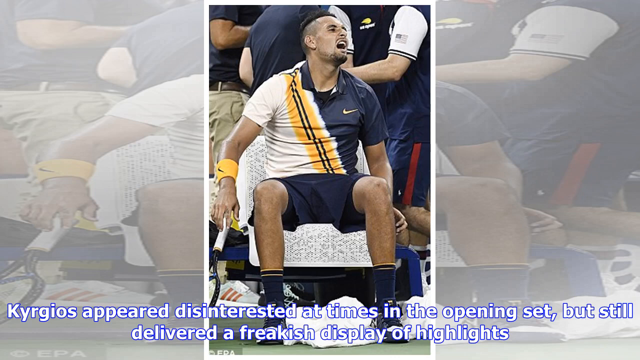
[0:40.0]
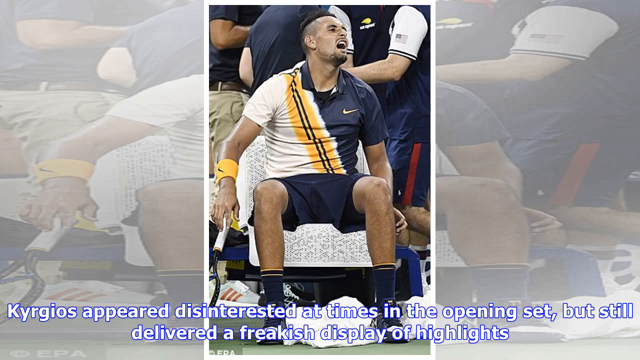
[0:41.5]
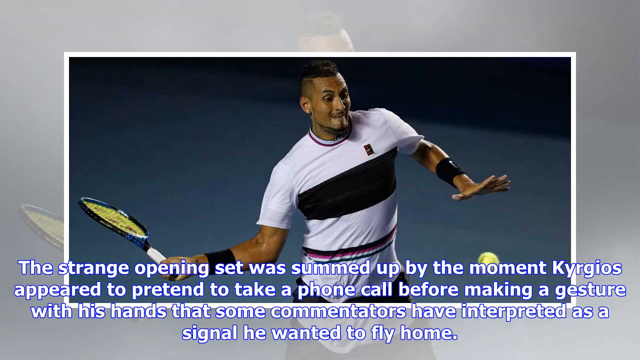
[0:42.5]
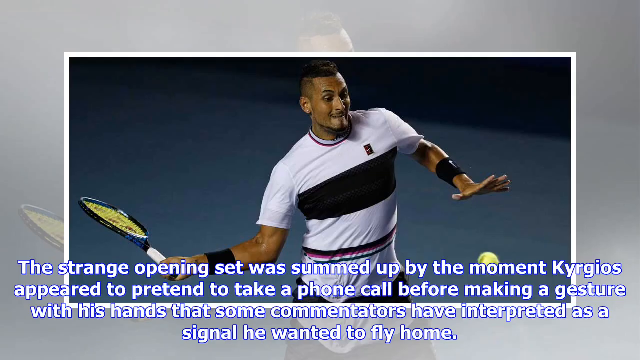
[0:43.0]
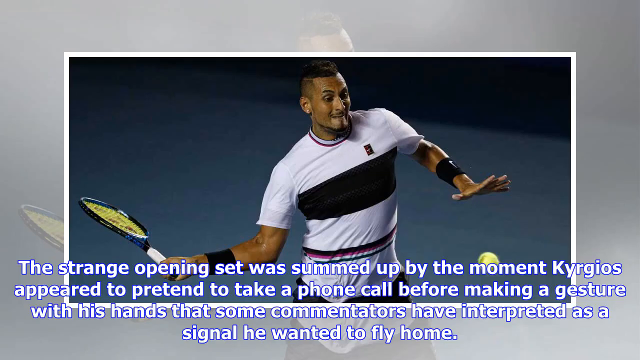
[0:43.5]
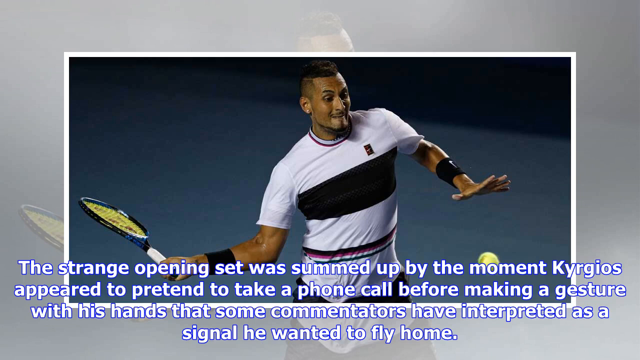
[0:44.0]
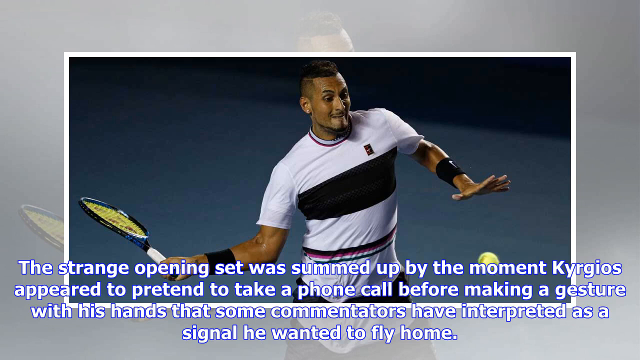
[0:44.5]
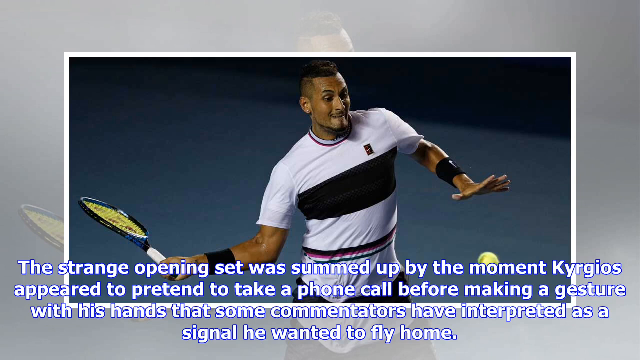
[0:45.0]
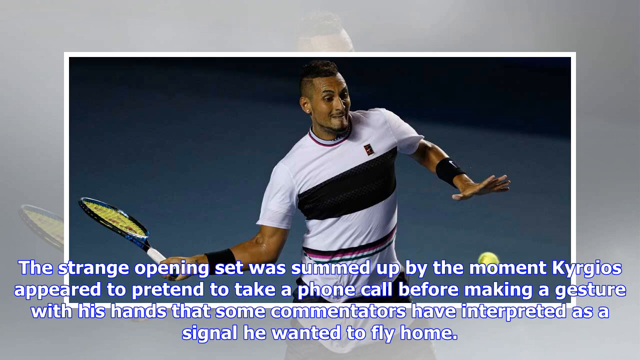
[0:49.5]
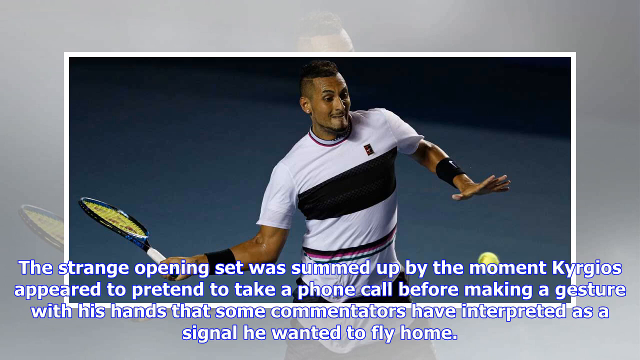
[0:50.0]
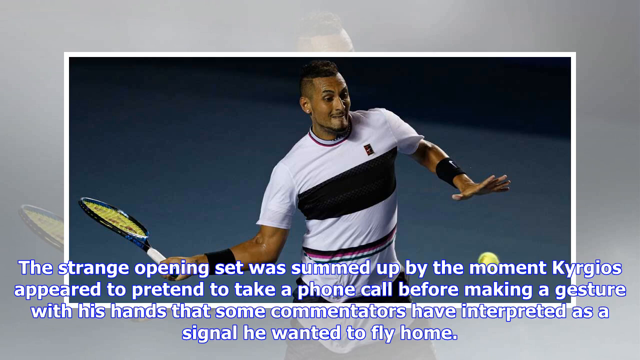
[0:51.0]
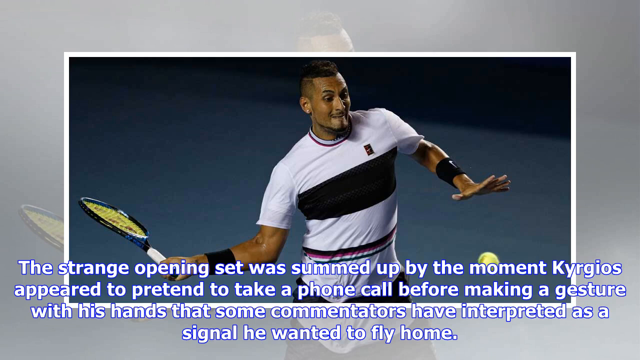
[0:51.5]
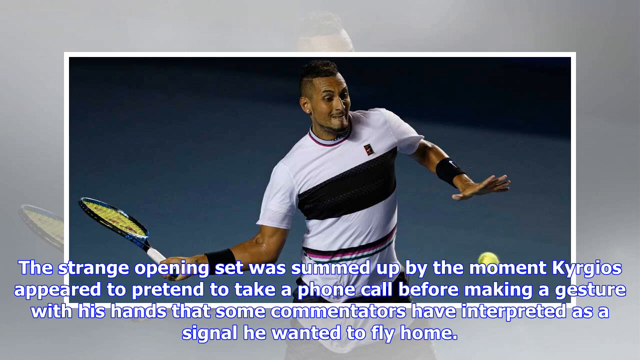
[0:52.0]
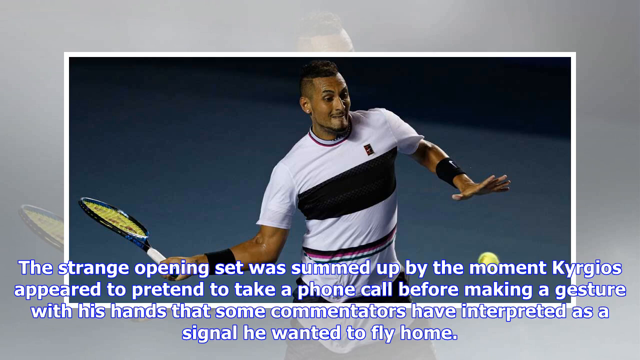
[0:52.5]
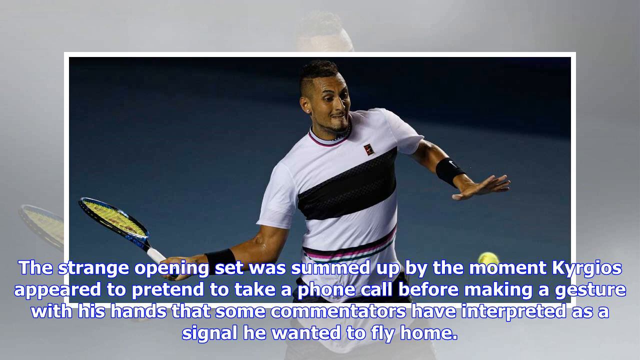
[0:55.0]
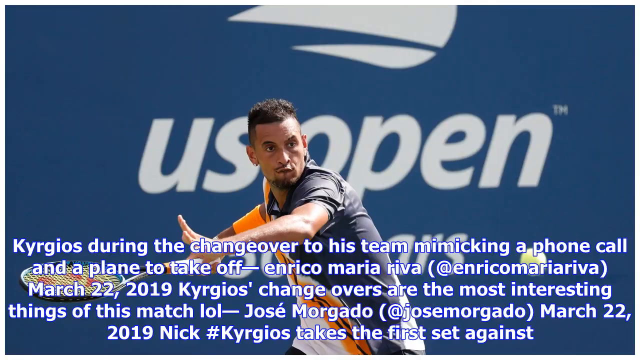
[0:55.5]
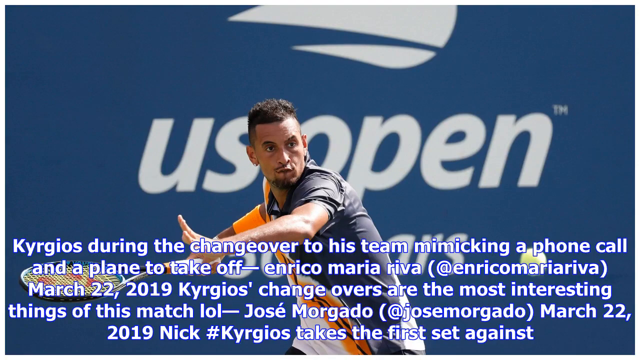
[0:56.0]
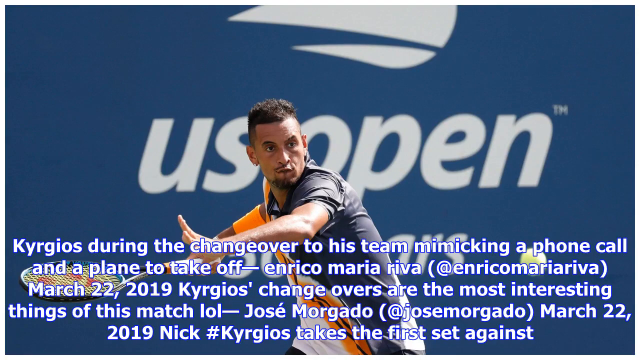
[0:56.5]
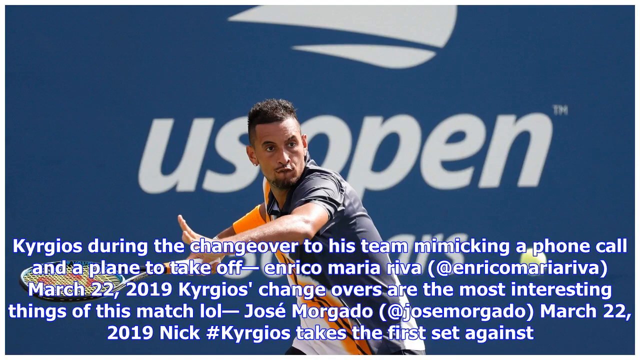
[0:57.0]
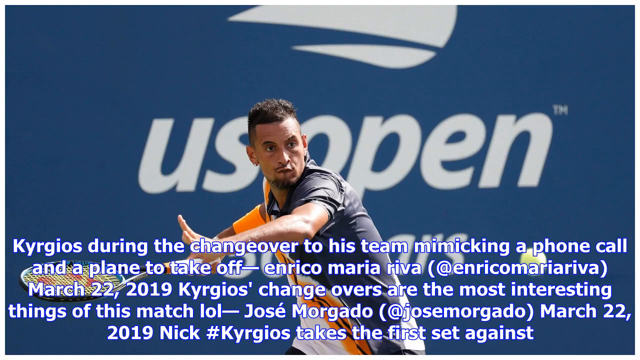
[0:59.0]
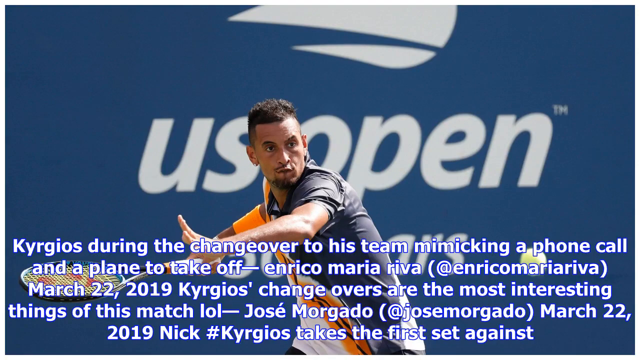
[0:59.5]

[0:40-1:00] The picture of Kyrgios shouting at someone while sitting down during a break stays on screen. It is followed by a picture of him midway through a return, about to strike the ball with his racket, making a weird face and looking focused and intense. Text mentions Kyrgios pretending to take a phone call, making a gesture with his hand that some commentators interpreted as a signal he wanted to fly home. Another picture follows in which he looks considerably older, focused as he is about to hit the ball with his racket, with text beginning "Kyrgios during the changeover" that refers to mimicking a phone call. In this picture he wears different clothes and apparently has a different haircut.